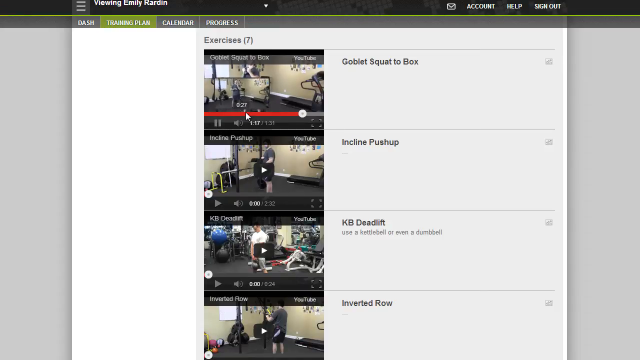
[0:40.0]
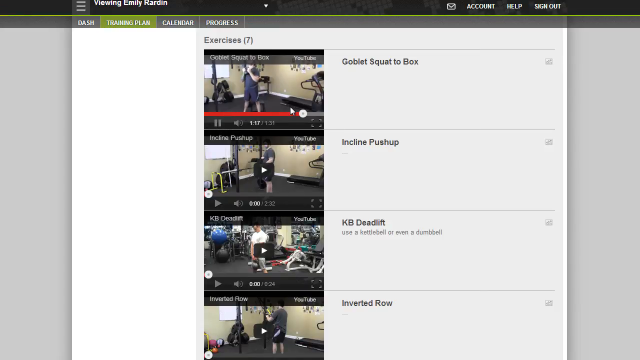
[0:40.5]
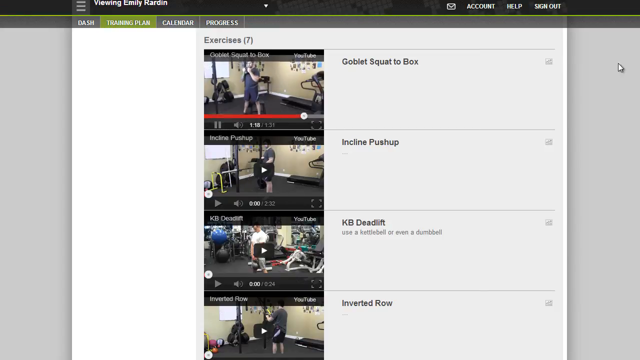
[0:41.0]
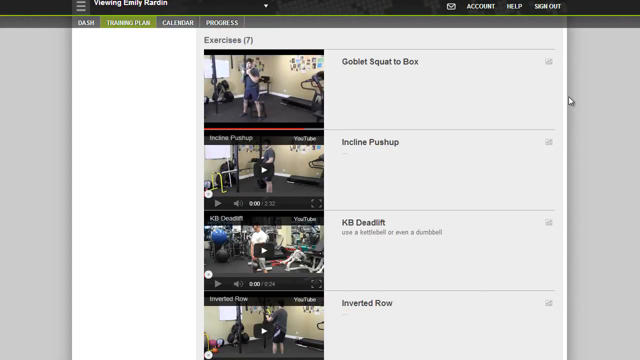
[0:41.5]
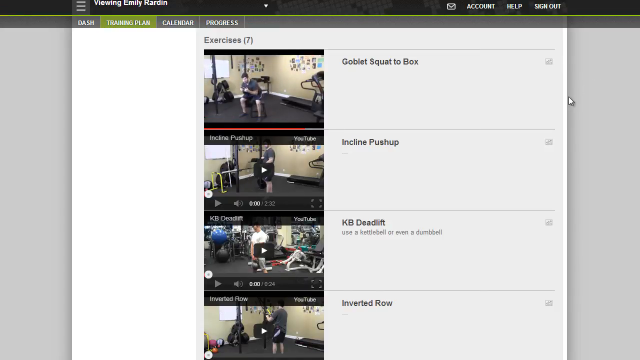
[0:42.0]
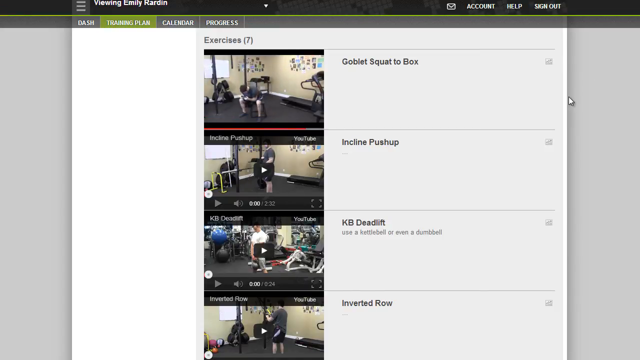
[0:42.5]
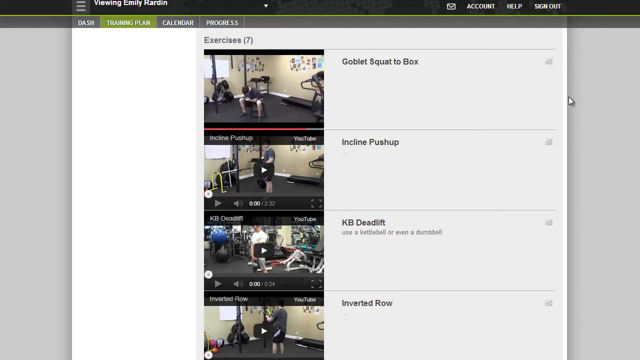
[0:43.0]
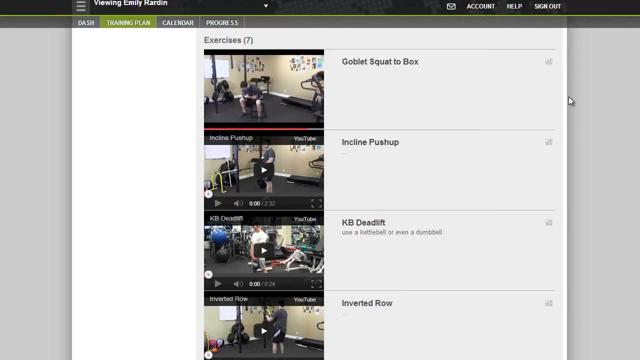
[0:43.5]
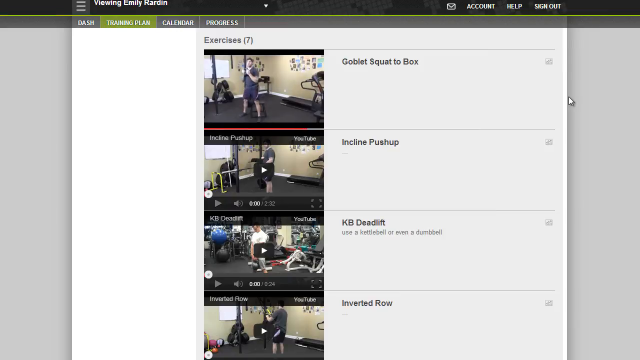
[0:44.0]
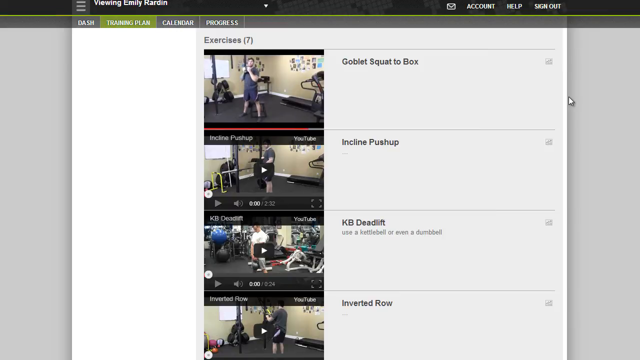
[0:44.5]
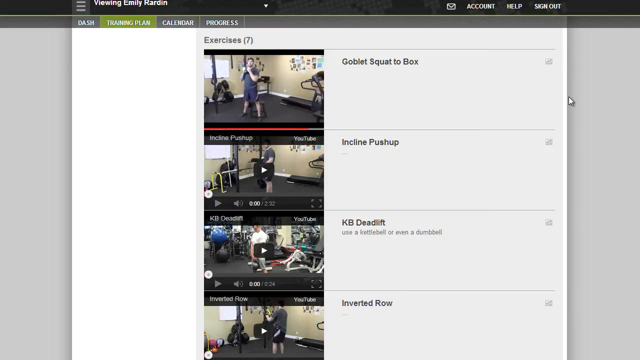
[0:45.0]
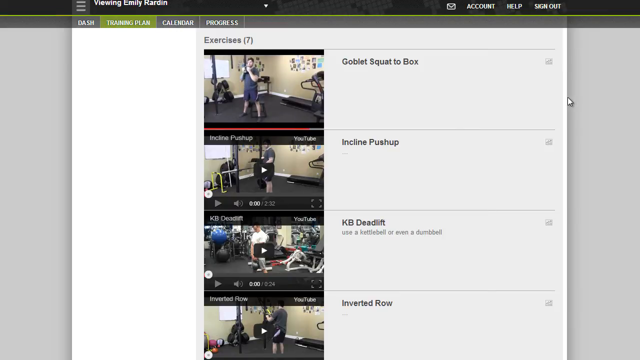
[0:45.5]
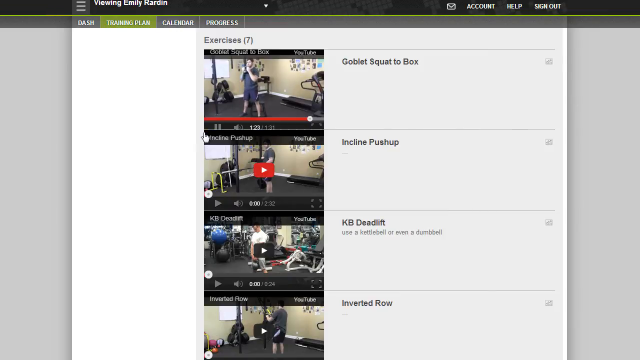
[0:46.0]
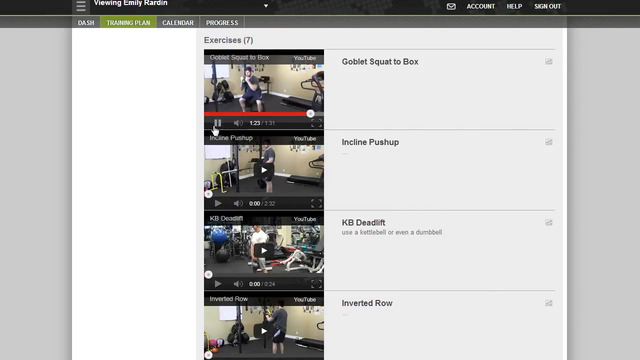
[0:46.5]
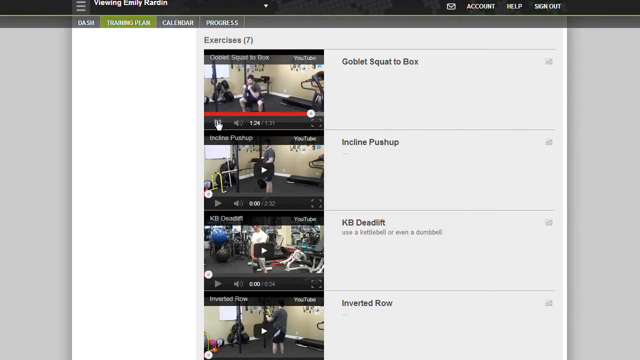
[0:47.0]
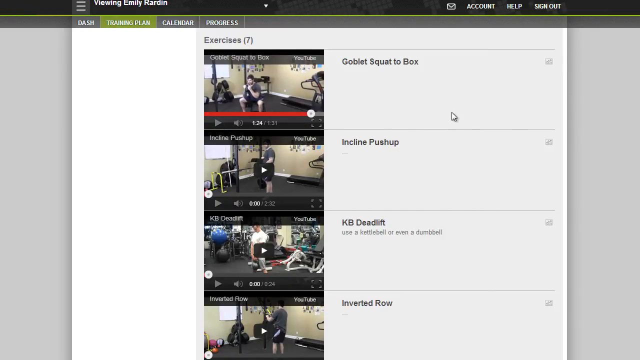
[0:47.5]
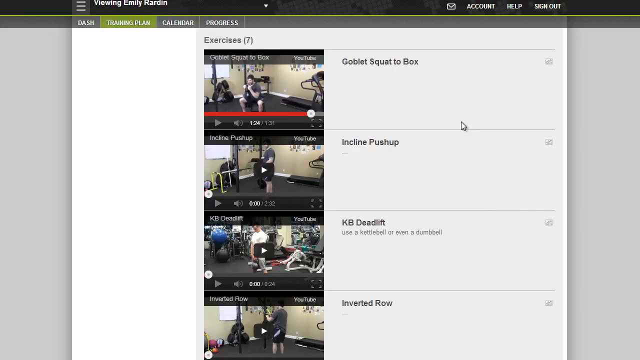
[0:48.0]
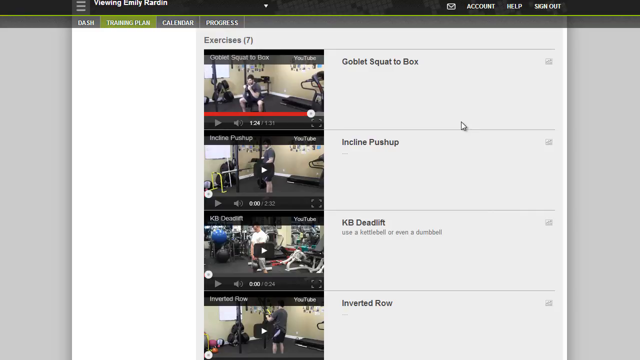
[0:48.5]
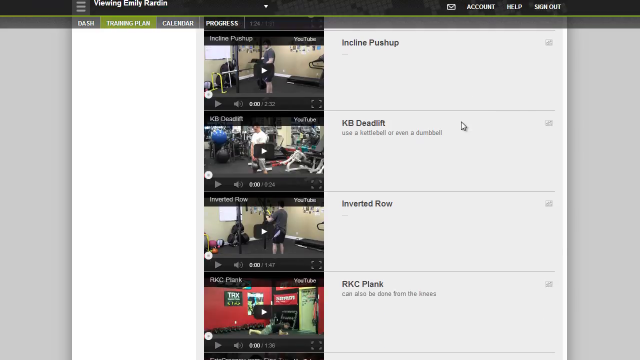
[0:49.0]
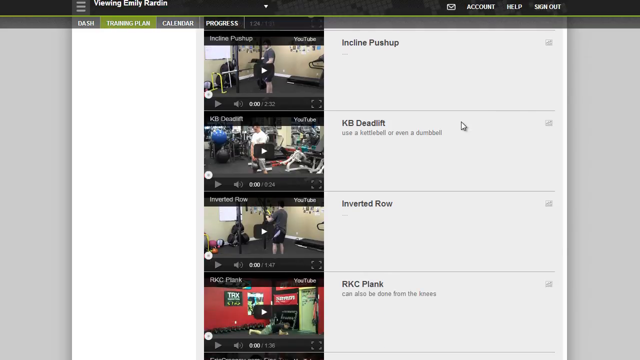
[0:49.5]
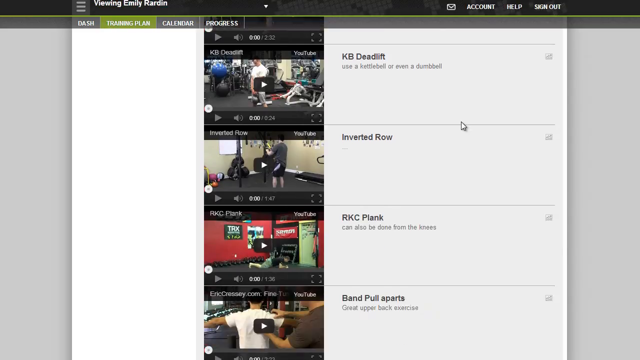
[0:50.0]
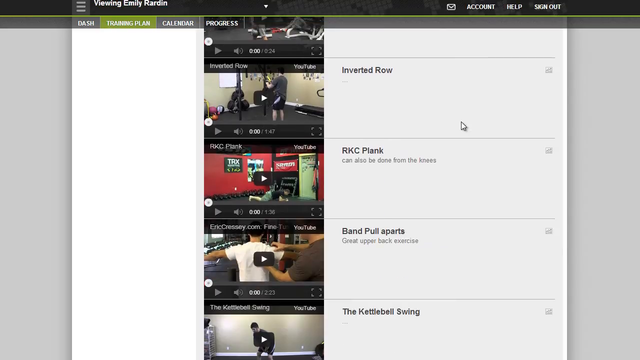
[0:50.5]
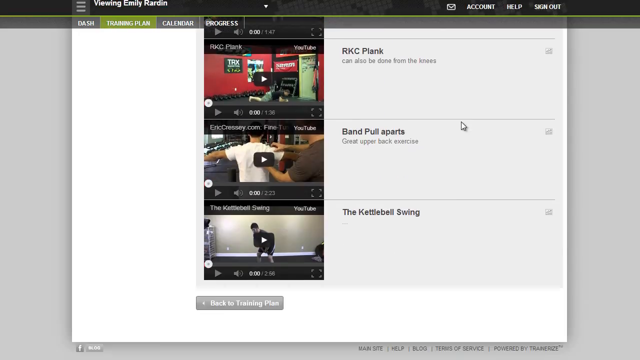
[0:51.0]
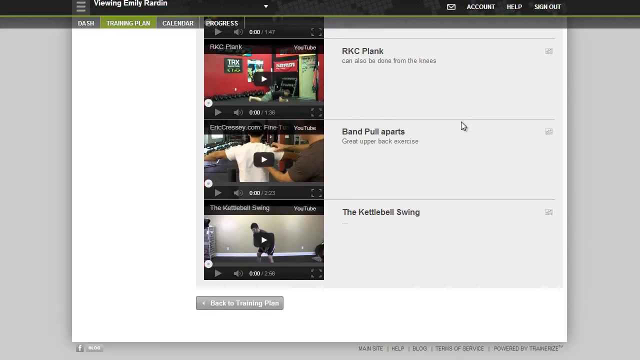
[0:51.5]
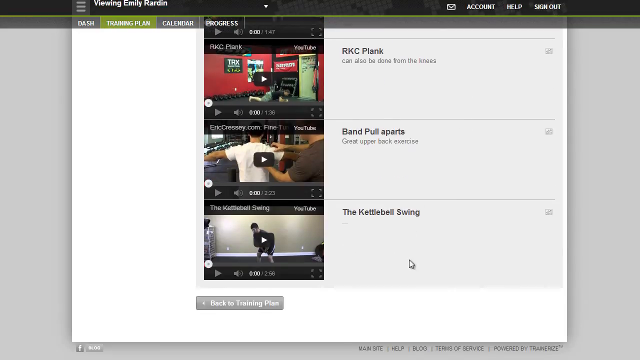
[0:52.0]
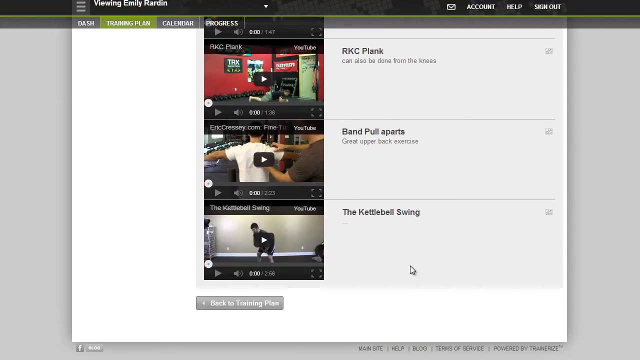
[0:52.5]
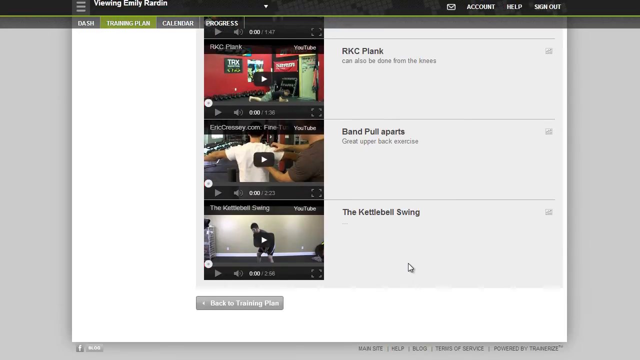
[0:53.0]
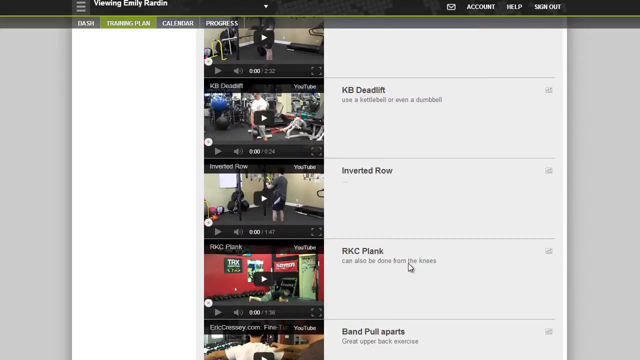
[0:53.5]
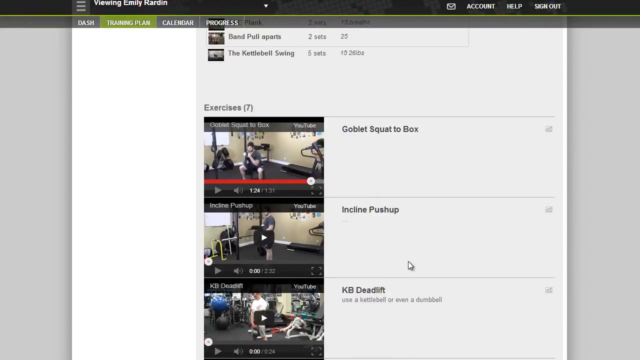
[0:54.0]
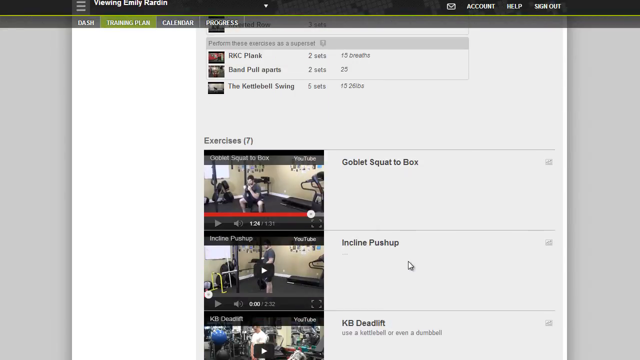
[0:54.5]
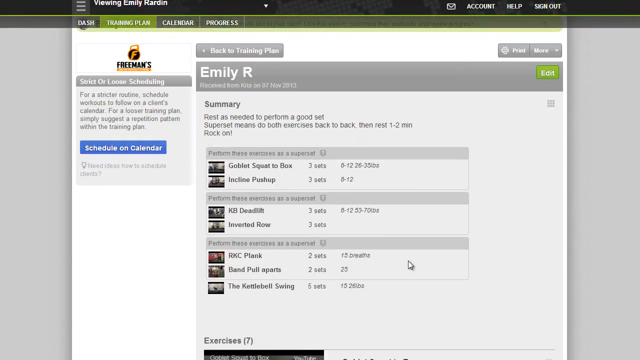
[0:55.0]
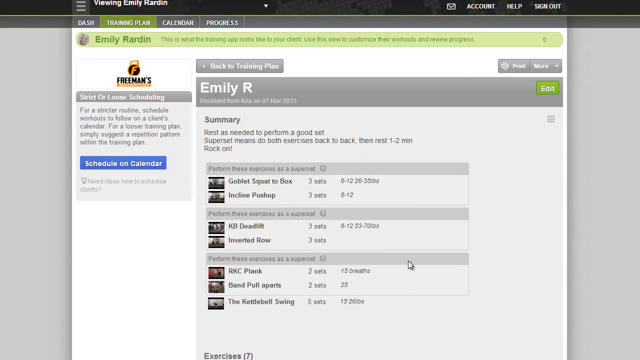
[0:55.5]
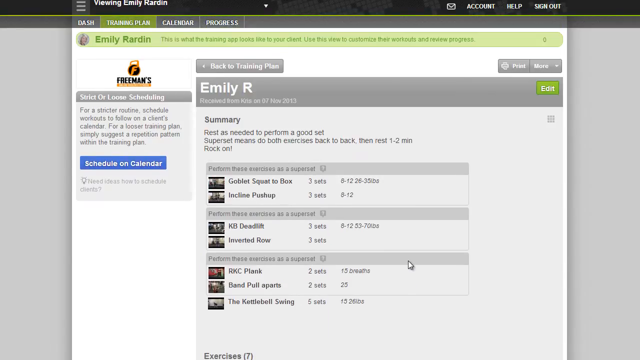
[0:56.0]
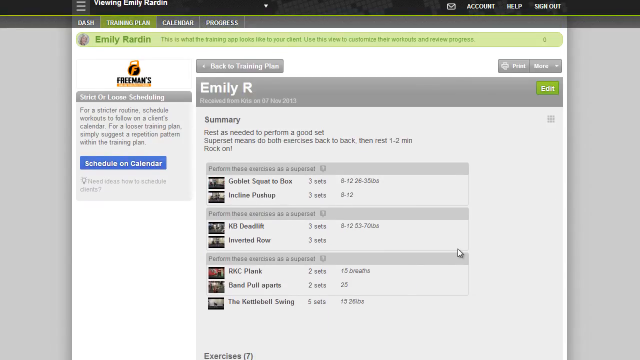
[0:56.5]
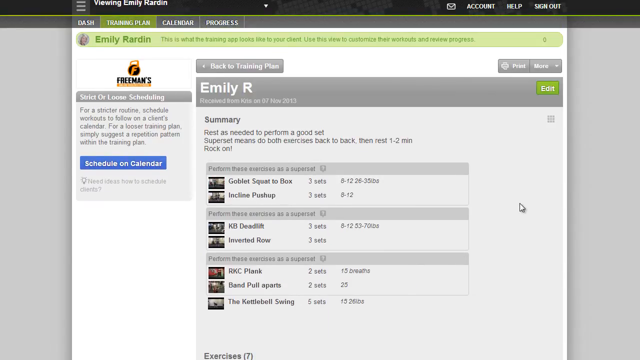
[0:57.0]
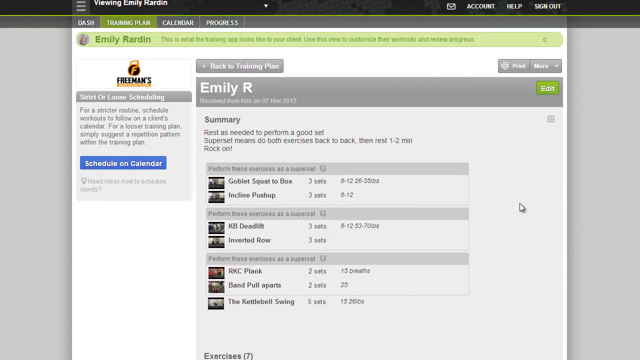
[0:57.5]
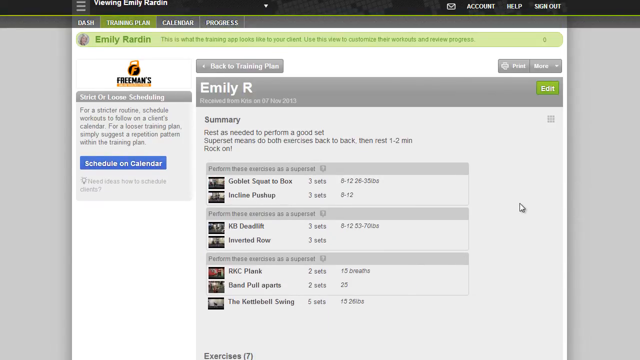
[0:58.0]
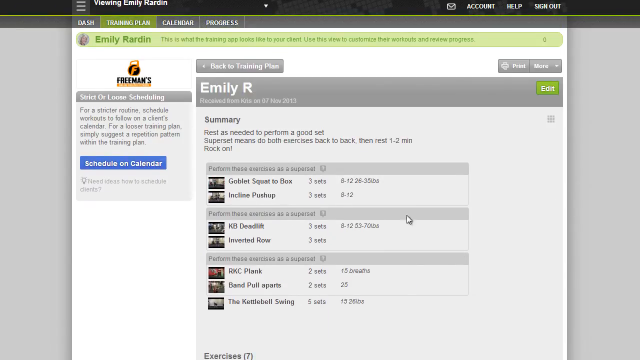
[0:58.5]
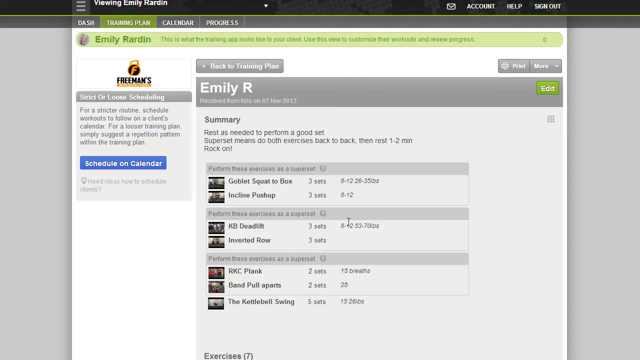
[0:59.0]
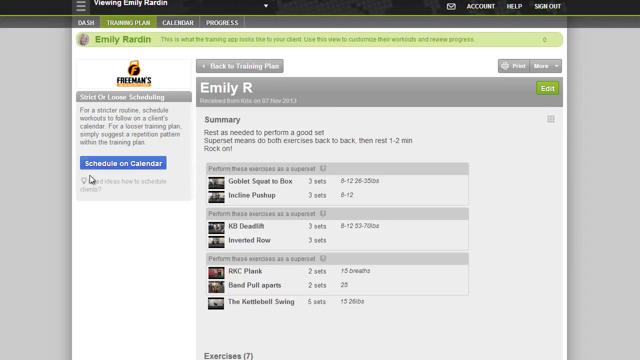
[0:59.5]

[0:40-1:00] A screen shows a smaller computer screen with squares stacked one on top of another down the left side, each containing a different video with its name to the right. The top video shows a man standing in a room with a gray floor and a treadmill, squatting down, labeled "Goblet Squat to Box." Below it is a video of the same man doing a different exercise, labeled "Incline Pushup." Next is a different room with a different man doing a different exercise with a kettle ball or possibly a dumbbell, labeled "KB Deadlift." Below that is another square video labeled "Inverted Row." Someone uses the pointer to pick different videos to watch.